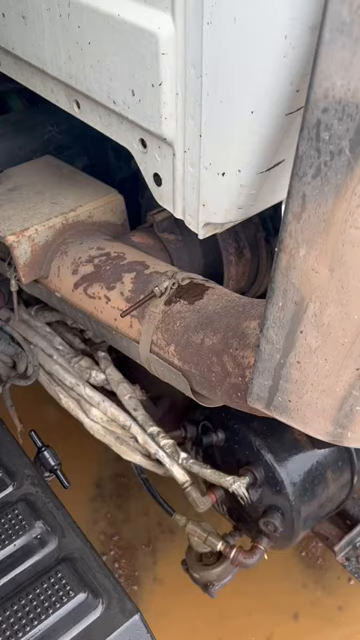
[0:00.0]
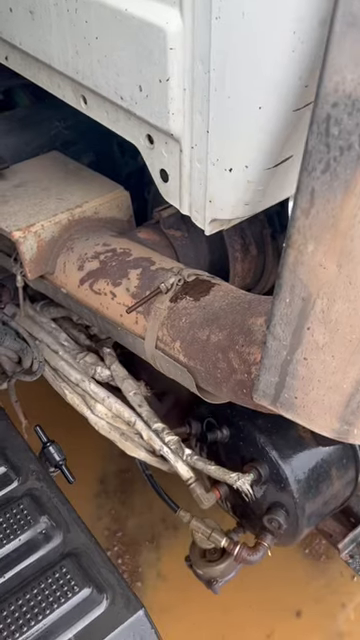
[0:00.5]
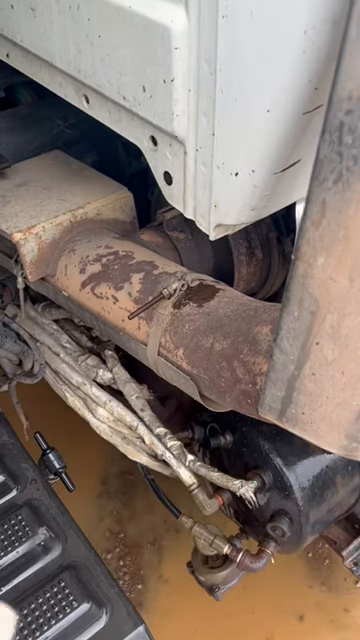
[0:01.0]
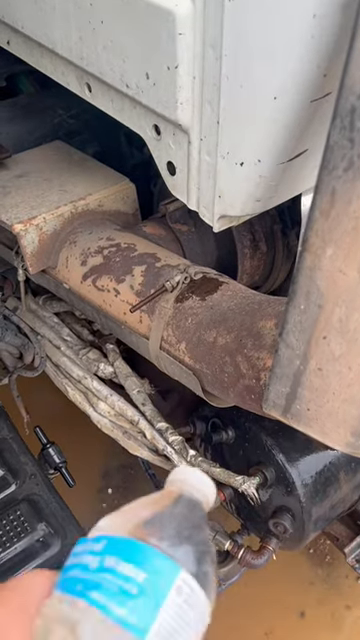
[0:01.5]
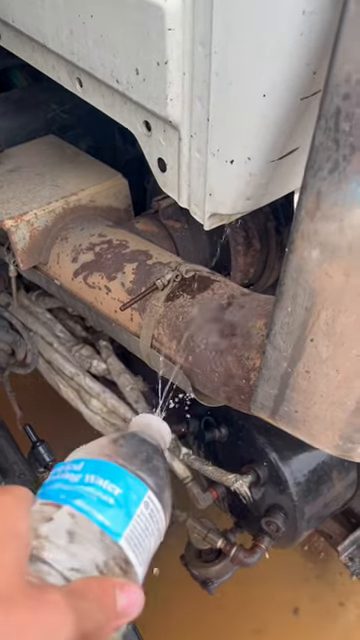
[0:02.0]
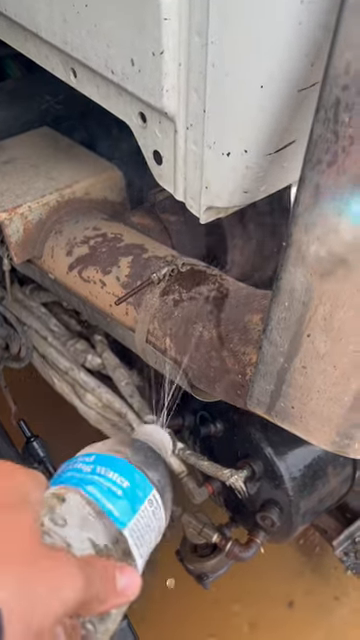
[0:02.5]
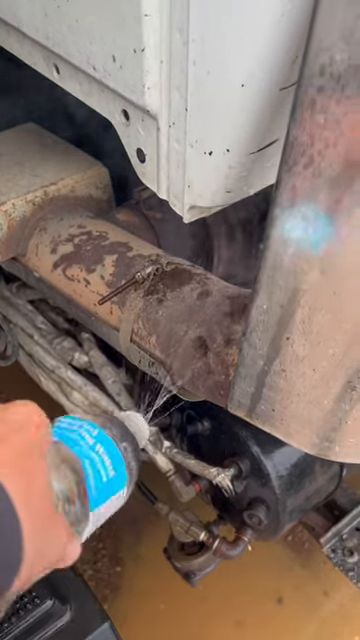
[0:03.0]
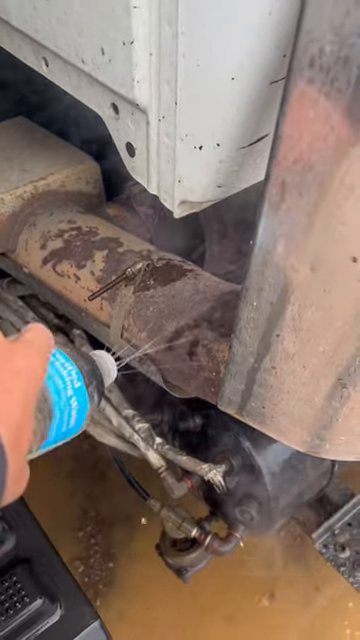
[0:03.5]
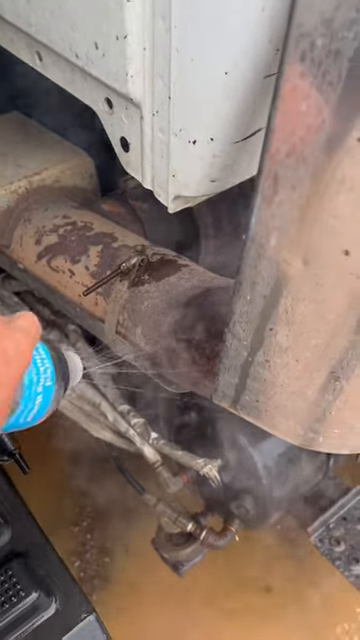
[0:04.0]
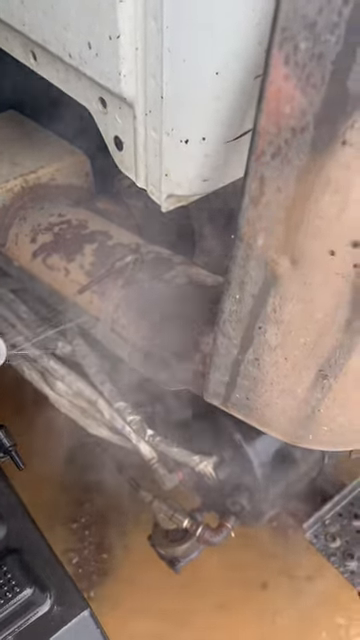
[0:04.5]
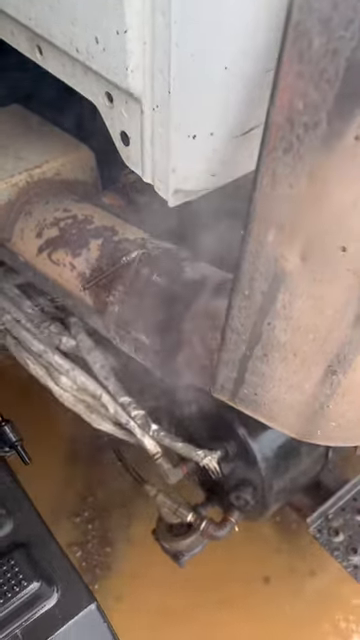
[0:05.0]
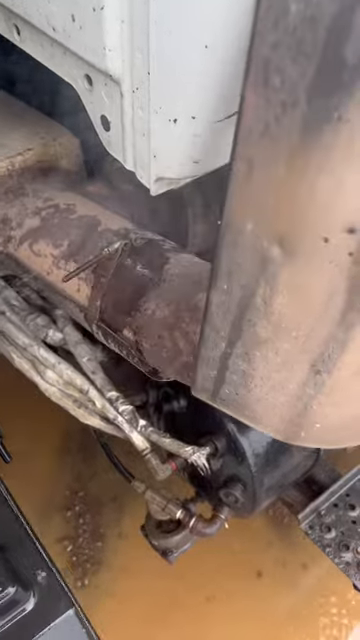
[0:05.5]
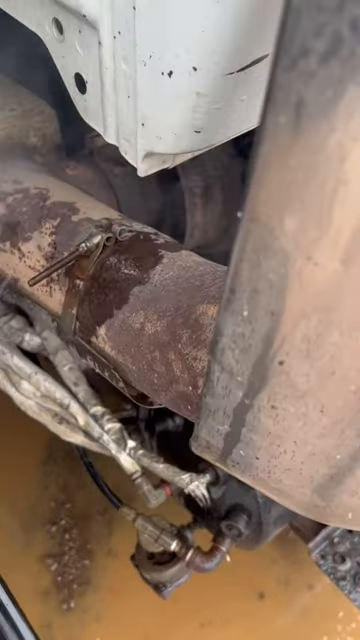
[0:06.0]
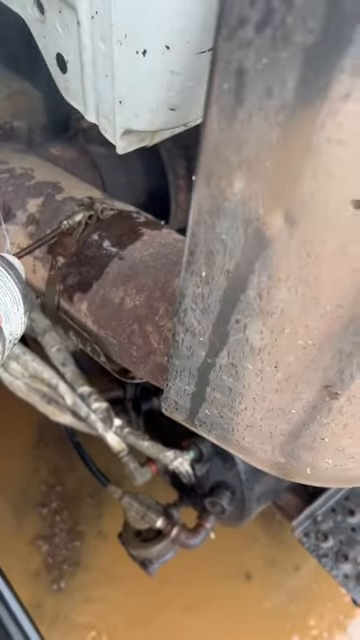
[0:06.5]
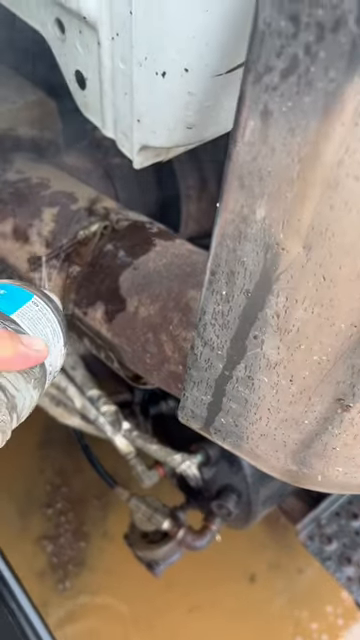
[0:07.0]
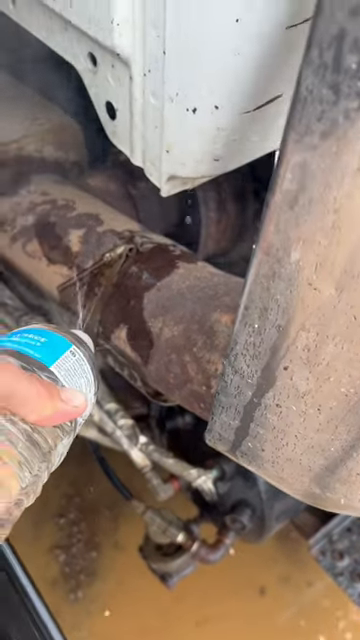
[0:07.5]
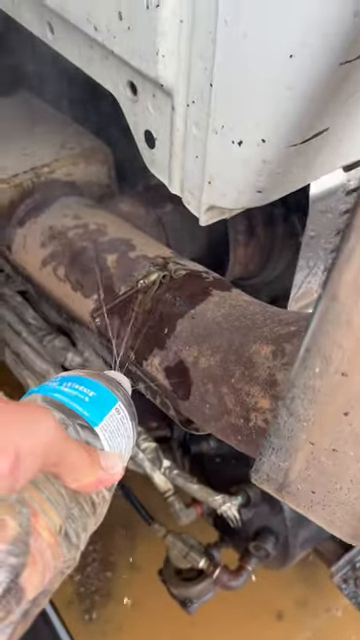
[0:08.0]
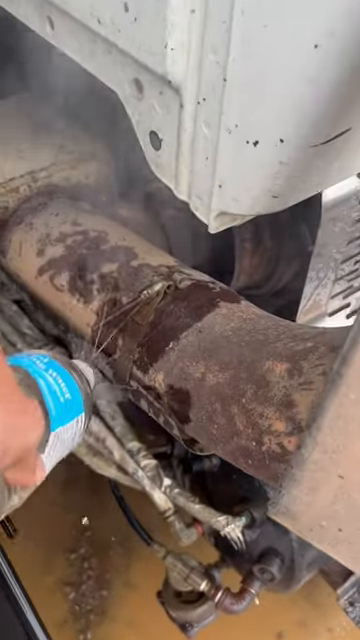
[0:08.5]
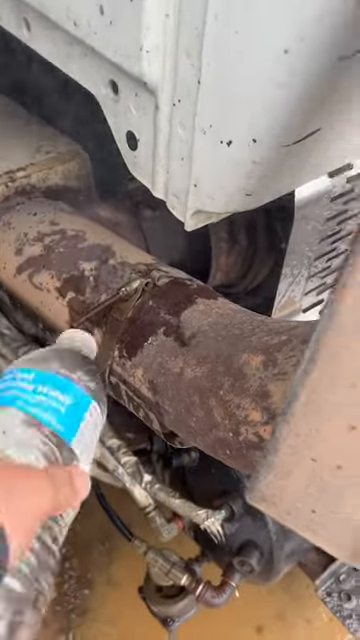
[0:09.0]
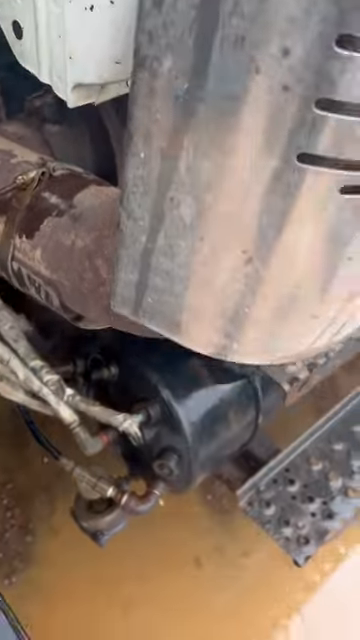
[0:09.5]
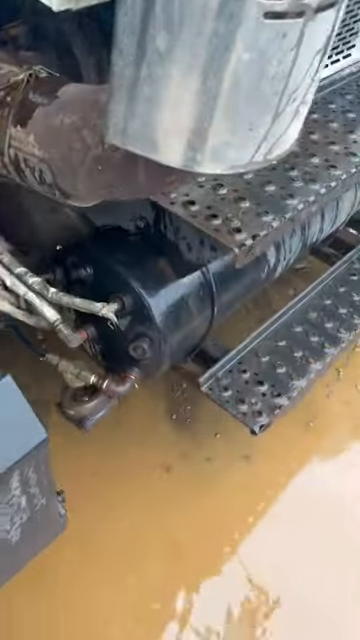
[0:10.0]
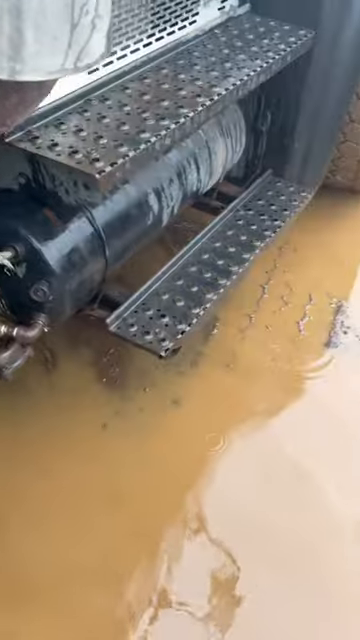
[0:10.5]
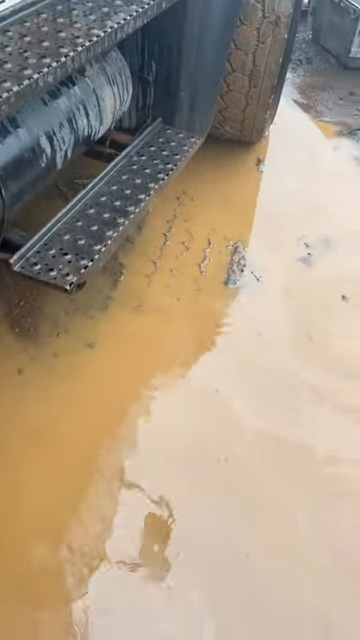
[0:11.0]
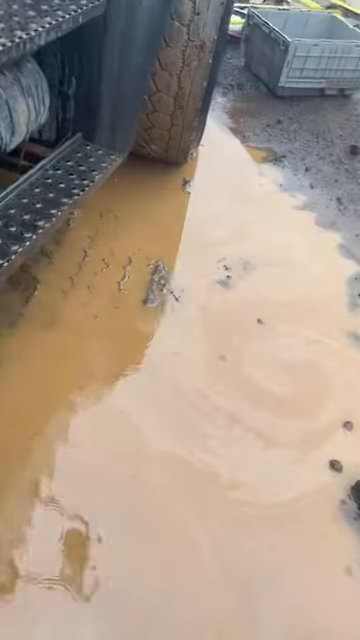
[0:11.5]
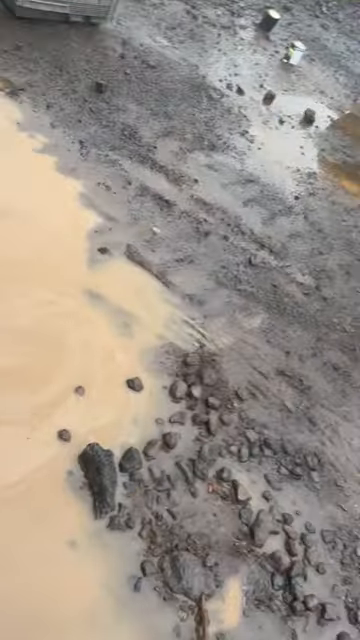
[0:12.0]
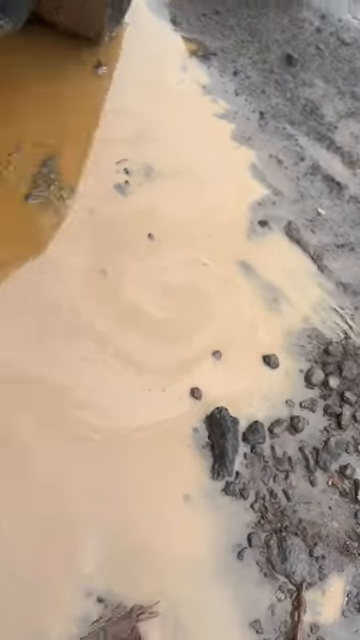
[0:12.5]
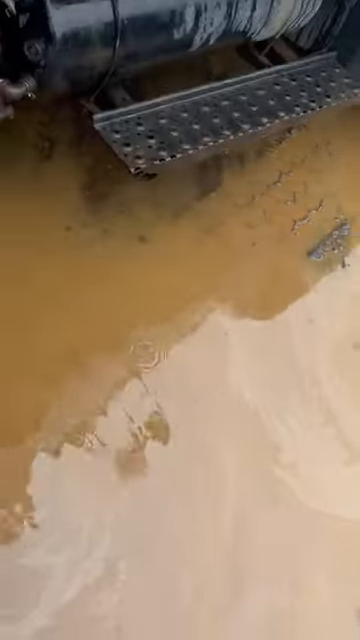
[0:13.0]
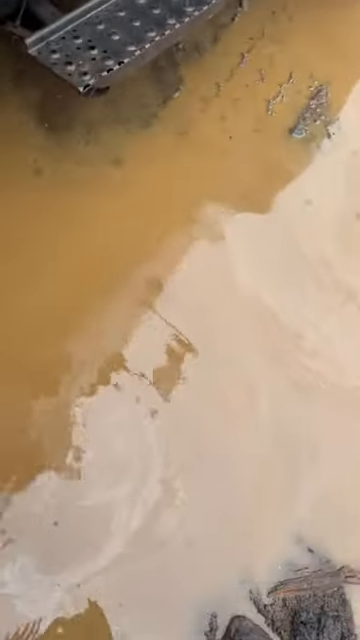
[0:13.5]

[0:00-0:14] Someone squirts water onto a very hot exhaust system on a semi-truck. The truck appears to have pulled up to the area it is in. A person takes a squirt bottle and squeezes water through its cap onto the exhaust system coming out from the engine area of the truck. Once the water hits the exhaust, a bunch of steam starts coming off it; the truck has most likely been driven quite a way and has possibly pulled into this area for maintenance. The ground underneath the truck looks like dirt and gravel, and there is muddy water all over the ground beneath it.